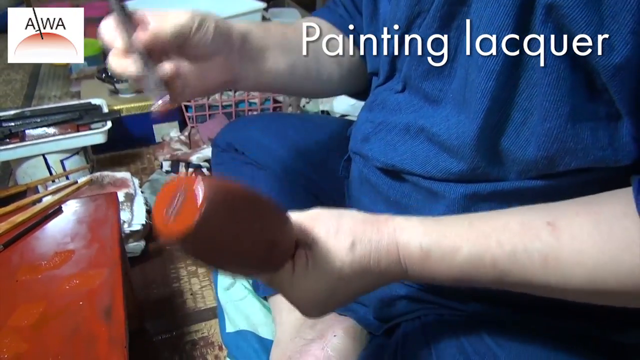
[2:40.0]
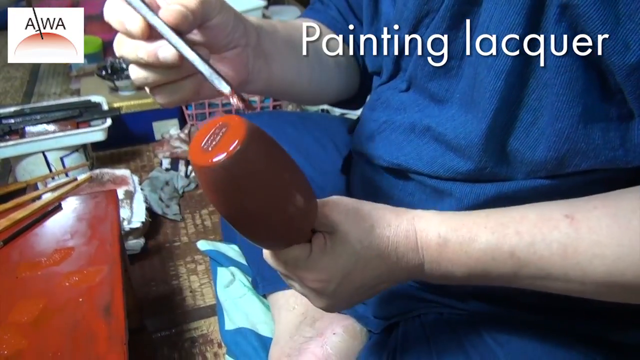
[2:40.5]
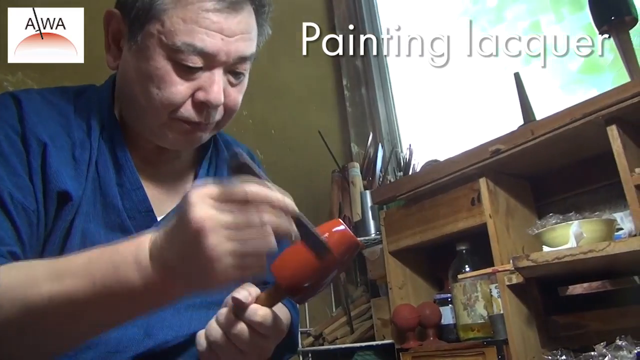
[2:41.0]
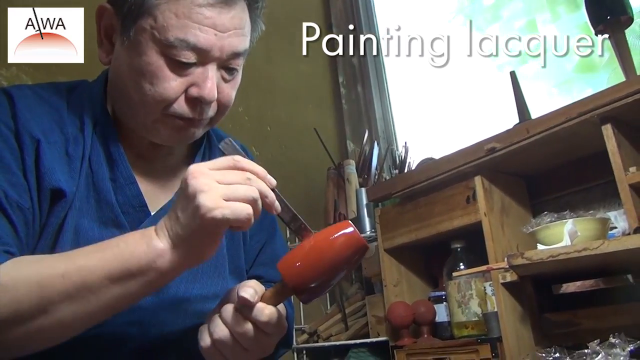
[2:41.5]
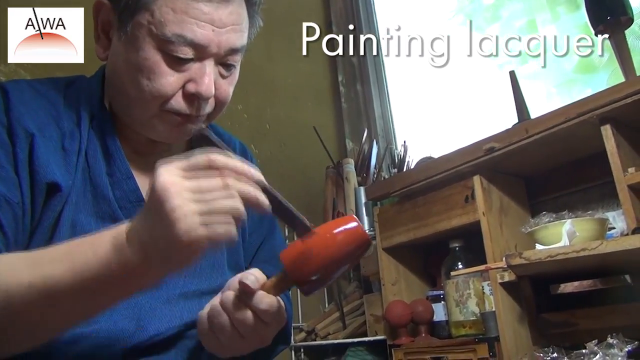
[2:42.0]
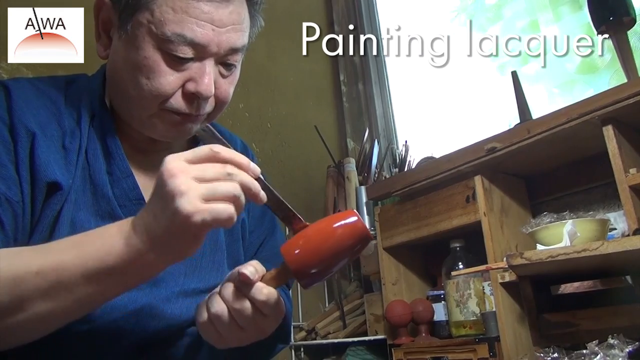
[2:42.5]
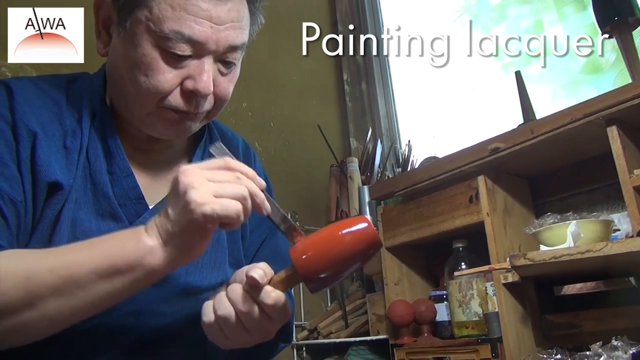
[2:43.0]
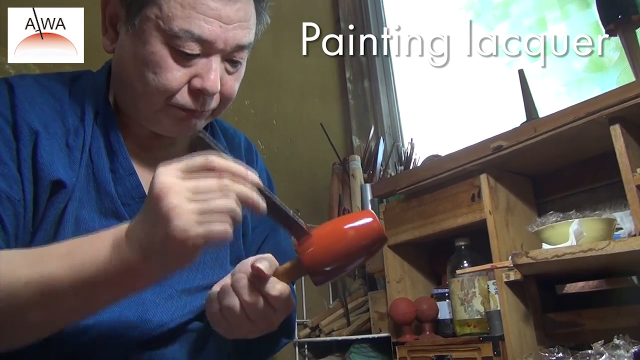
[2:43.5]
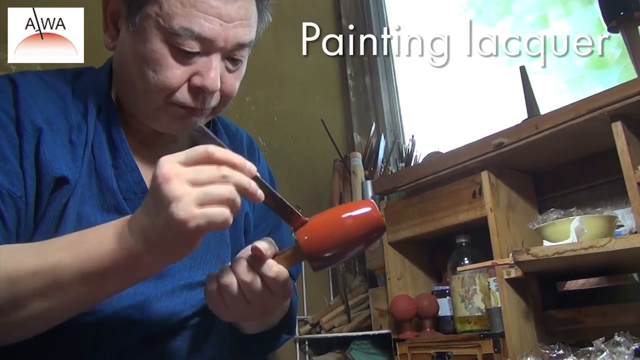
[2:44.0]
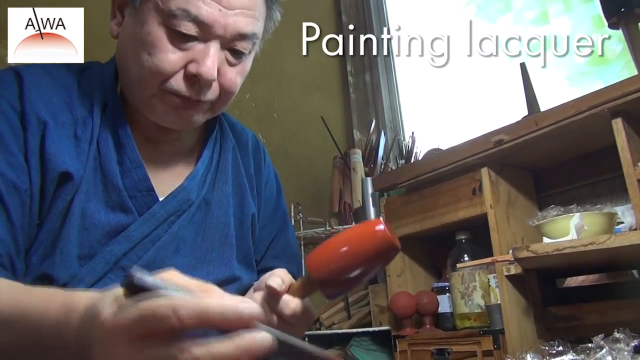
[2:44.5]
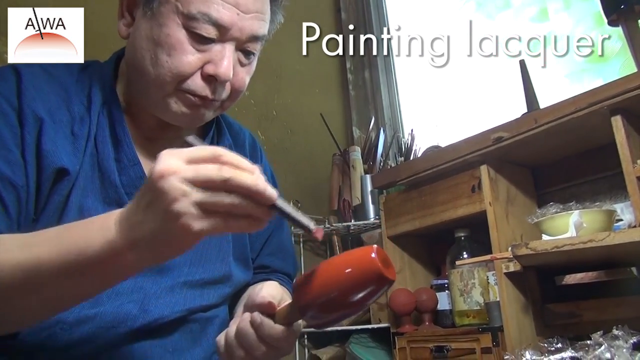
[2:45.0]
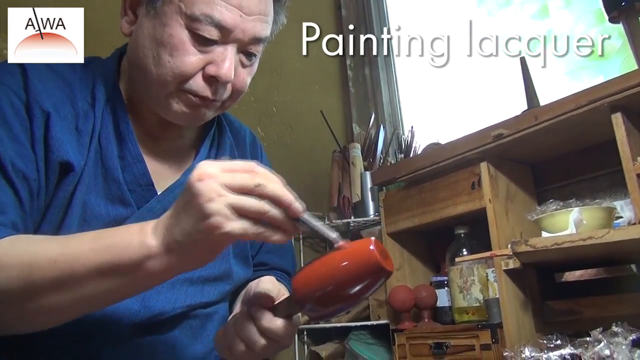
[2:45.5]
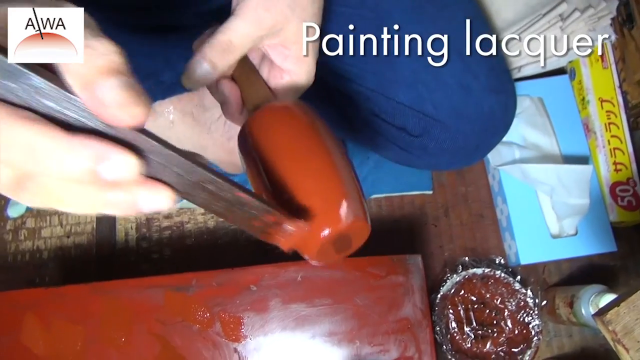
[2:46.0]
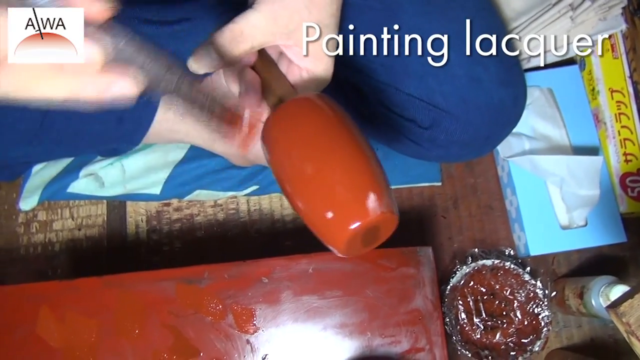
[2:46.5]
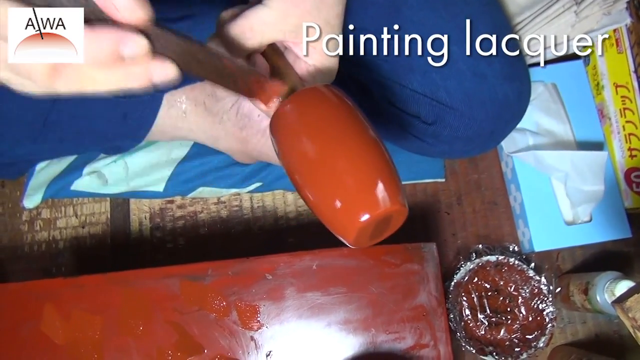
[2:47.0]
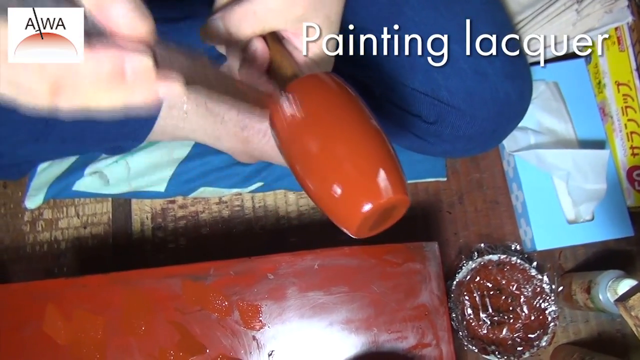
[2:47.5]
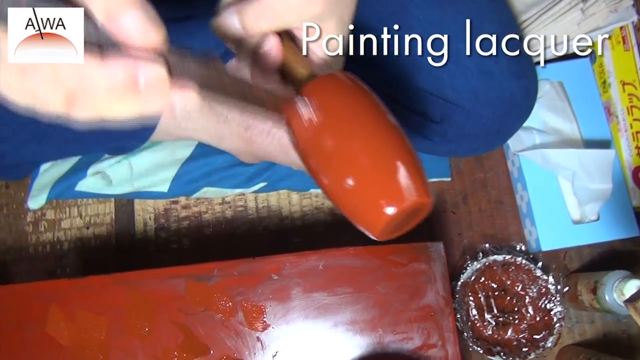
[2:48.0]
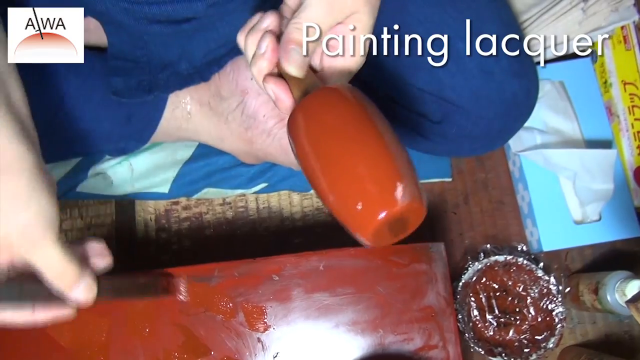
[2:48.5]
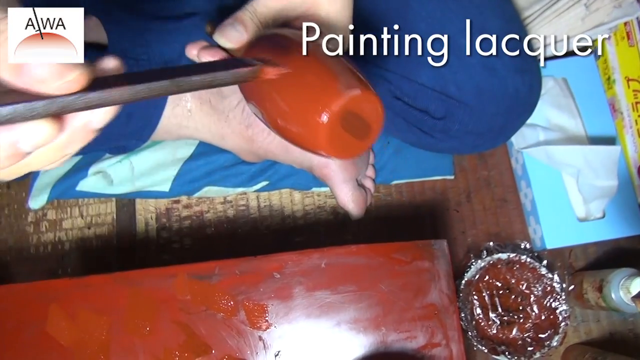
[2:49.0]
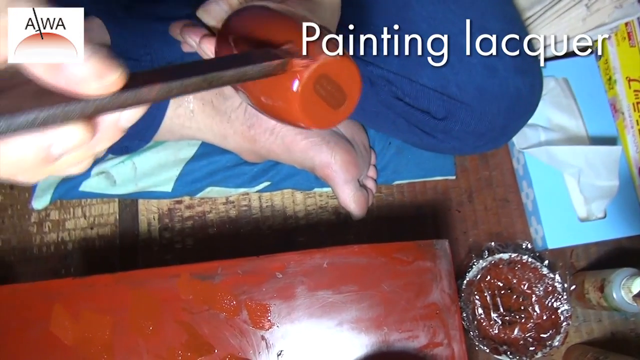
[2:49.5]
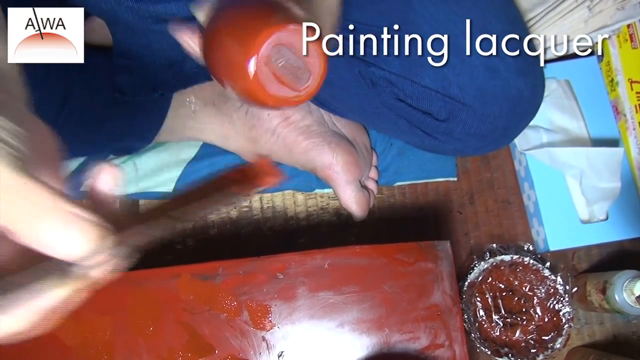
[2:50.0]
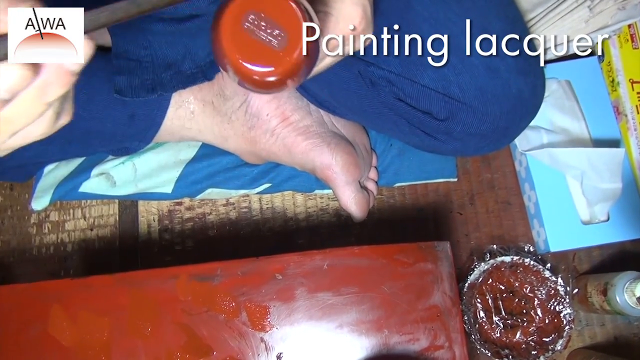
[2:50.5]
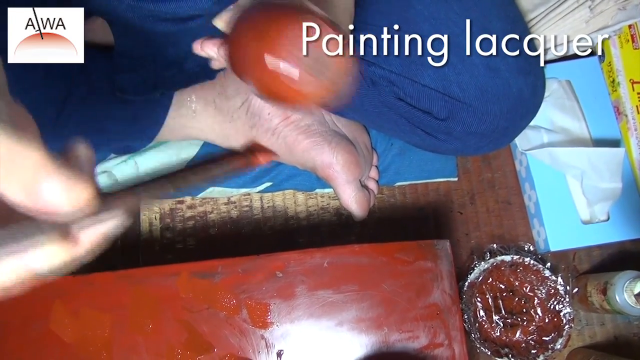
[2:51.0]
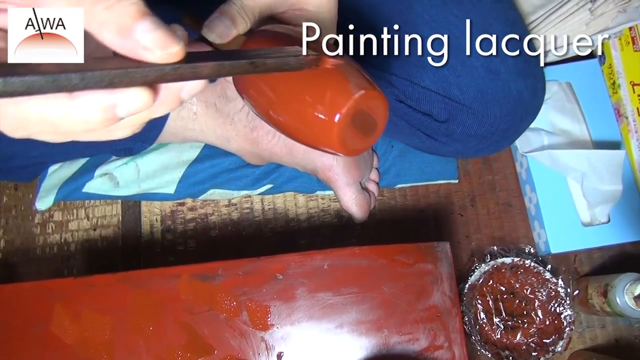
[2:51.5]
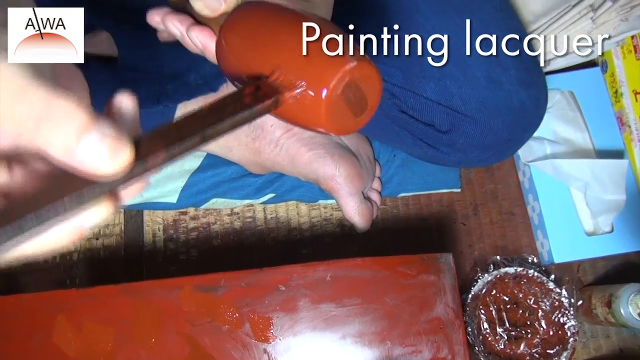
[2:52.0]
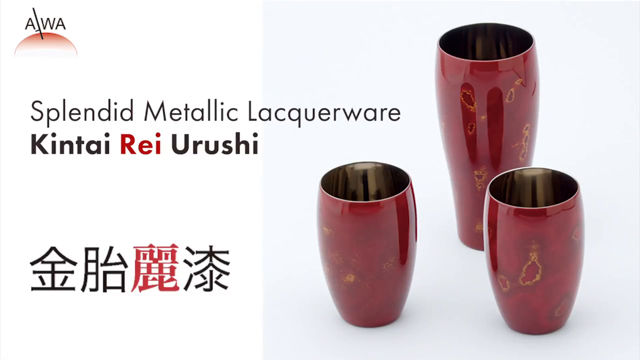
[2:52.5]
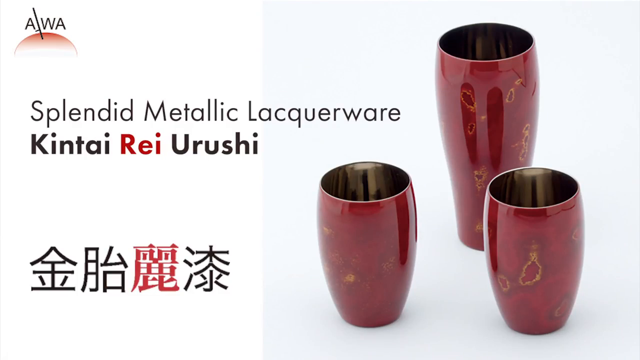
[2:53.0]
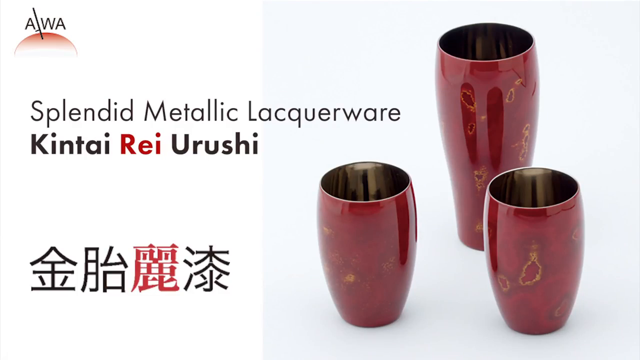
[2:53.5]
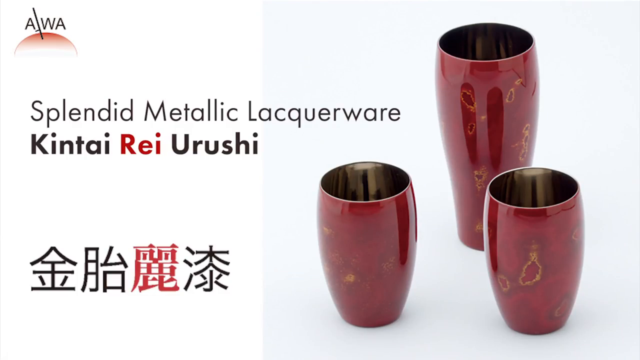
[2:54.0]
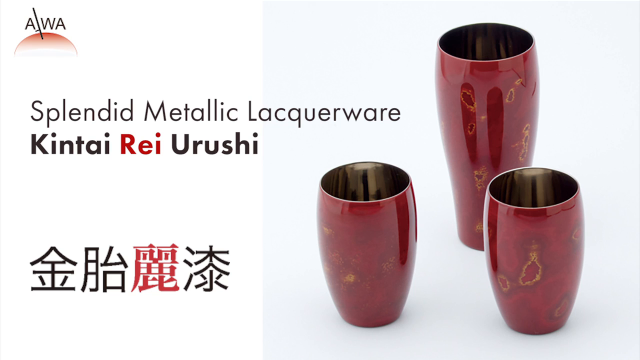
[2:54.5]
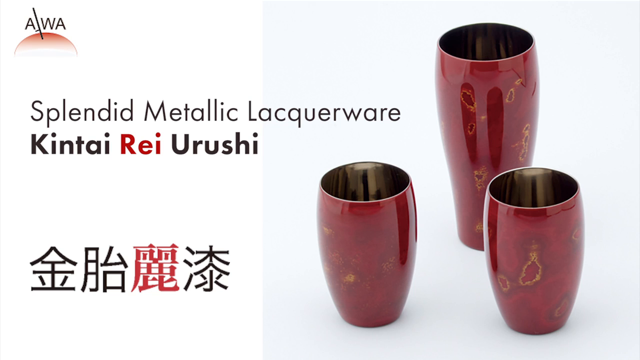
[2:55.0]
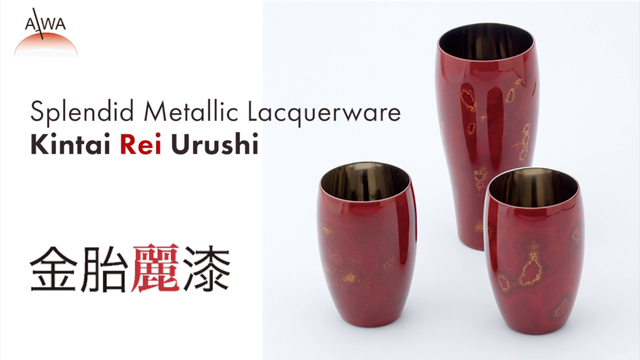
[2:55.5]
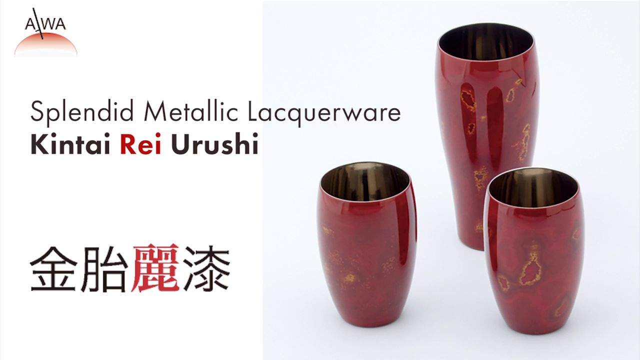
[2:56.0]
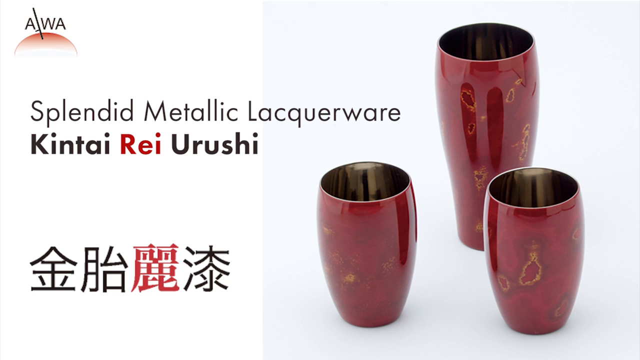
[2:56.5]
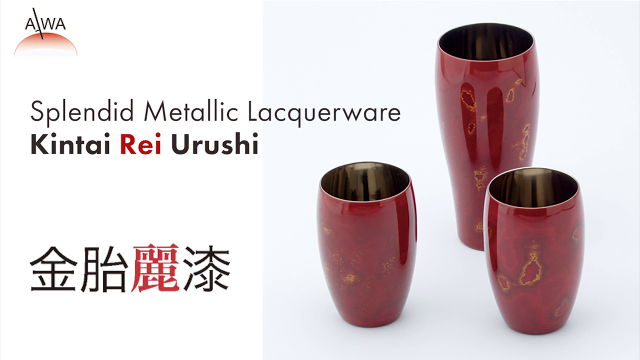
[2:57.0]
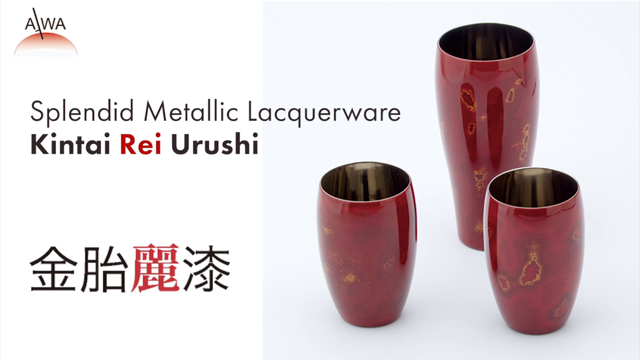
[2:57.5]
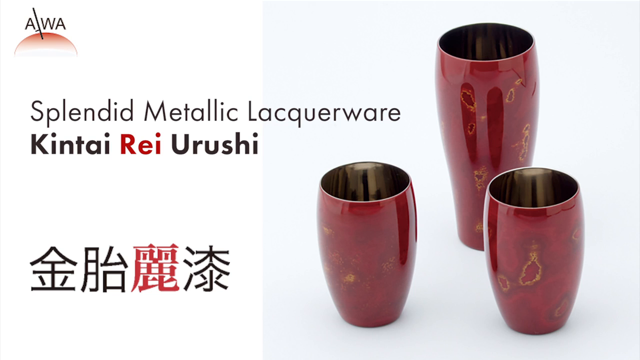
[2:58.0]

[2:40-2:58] An older Asian man paints the tumbler. He wears a blue short-sleeved shirt and blue pants, his feet are bare, and he sits cross-legged on the floor on a folded blue blanket. The paint is a dark red, rusty color, like red lacquer, very bright and shiny. He paints by hand with a paintbrush, looking very concentrated, holding the tumbler on a stick and wiping paint on the surface. The room is dirty and crowded: brown wooden shelves are in the back behind him, a blue tissue box is on the floor, and there is maybe some wax paper and a red substance in a bowl with plastic sheeting over it. Paintbrushes, trays, baskets, bowls and bottles are cluttered around him. There might be a window at the top right, but the light coming through is so bright that it is hard to see outside. Then a product page appears, like a screenshot, with a white background showing three tumblers of different shapes, all shiny dark red with yellow splotches on the sides. Text in black reads "splendid metallic lacquerware".